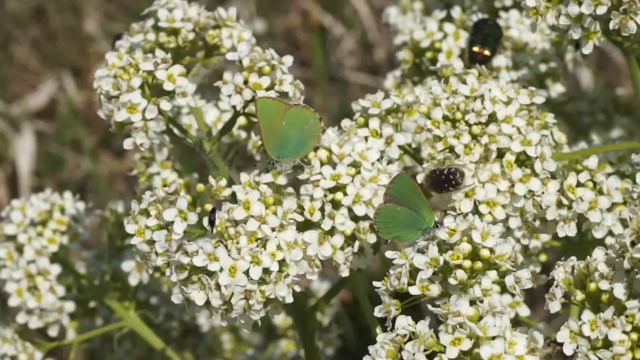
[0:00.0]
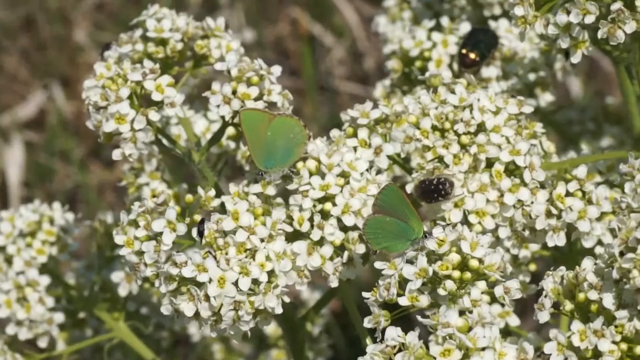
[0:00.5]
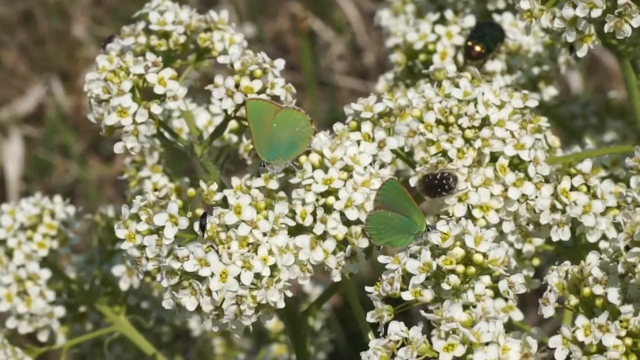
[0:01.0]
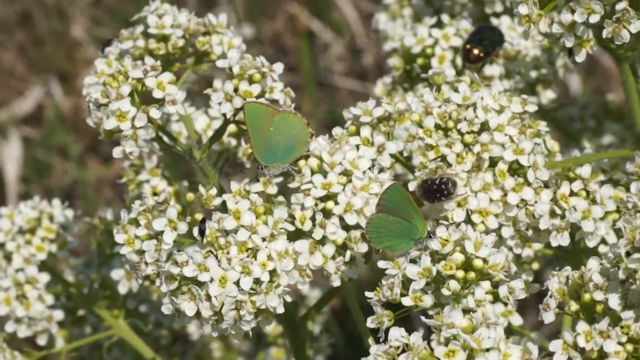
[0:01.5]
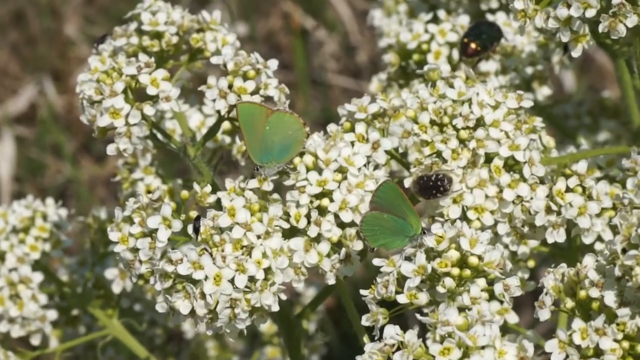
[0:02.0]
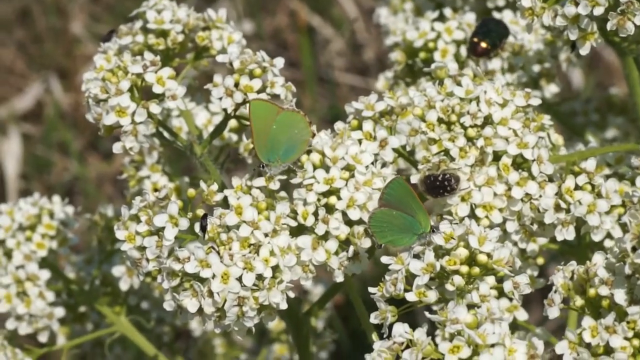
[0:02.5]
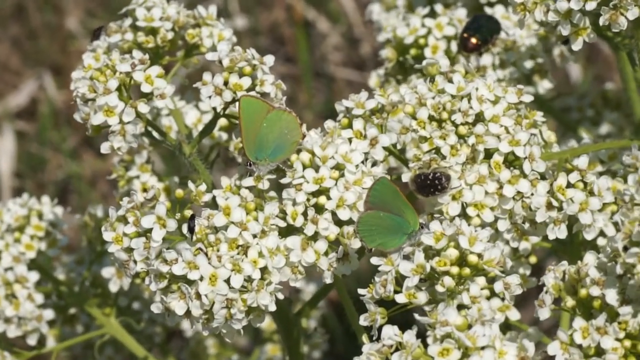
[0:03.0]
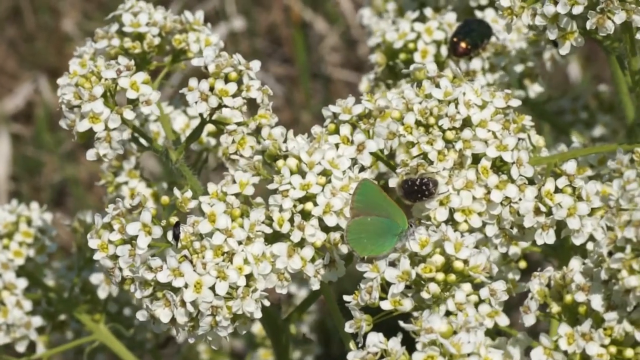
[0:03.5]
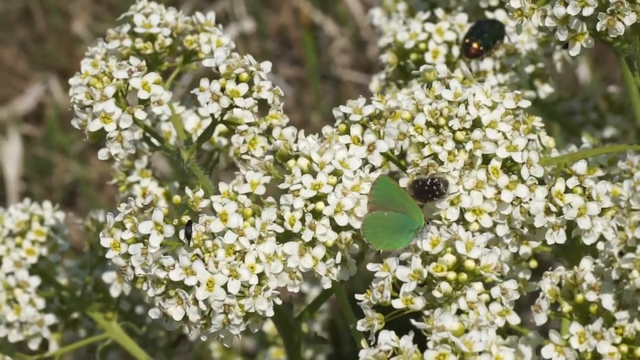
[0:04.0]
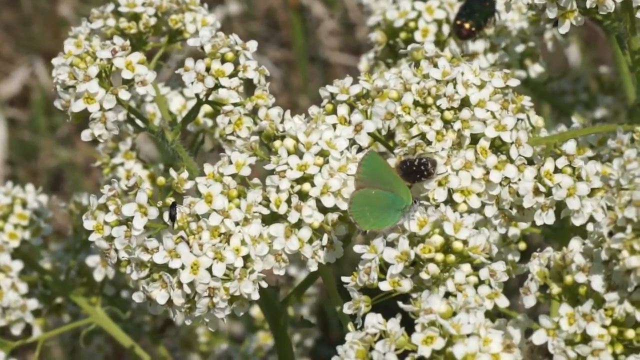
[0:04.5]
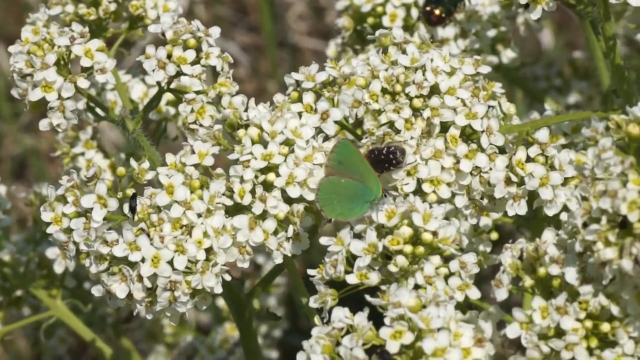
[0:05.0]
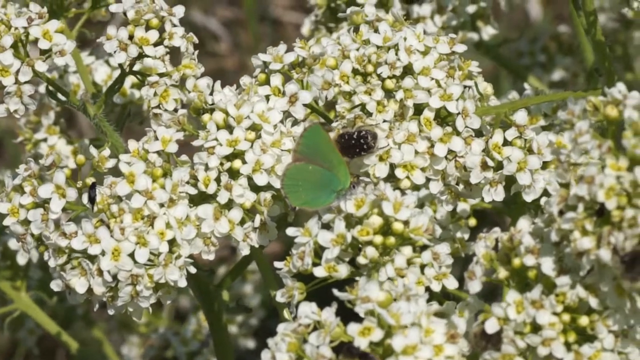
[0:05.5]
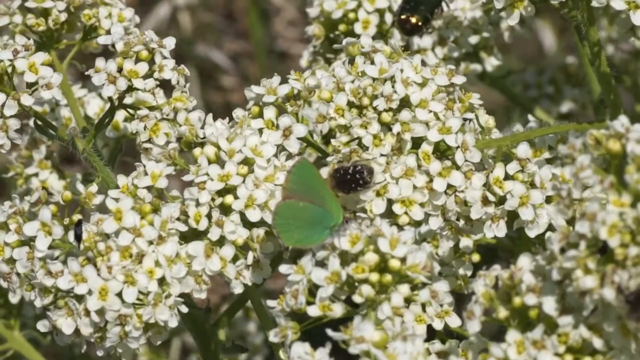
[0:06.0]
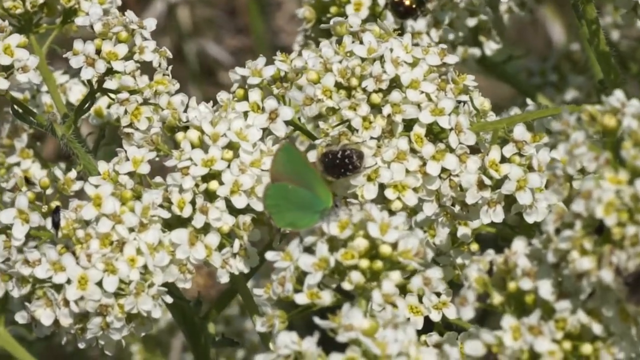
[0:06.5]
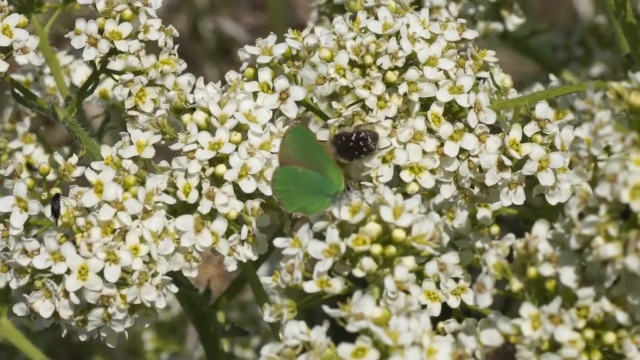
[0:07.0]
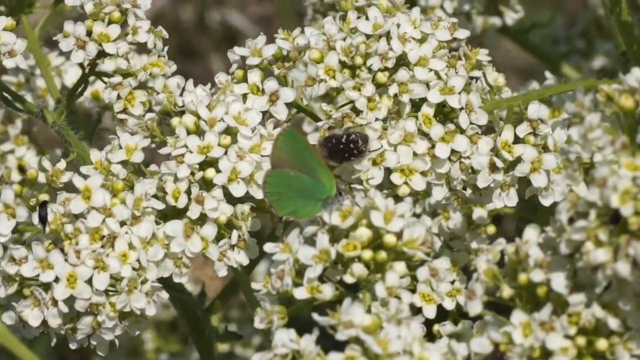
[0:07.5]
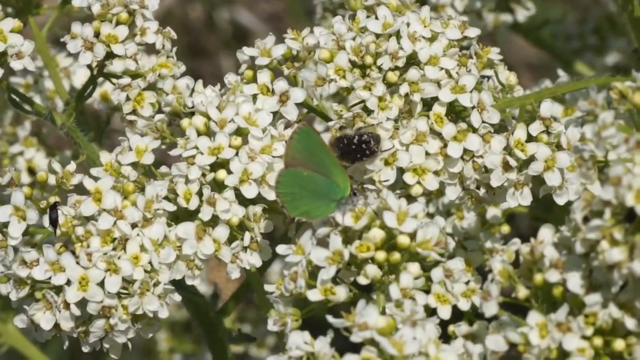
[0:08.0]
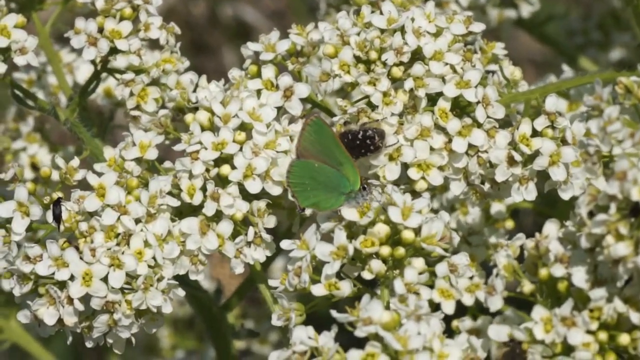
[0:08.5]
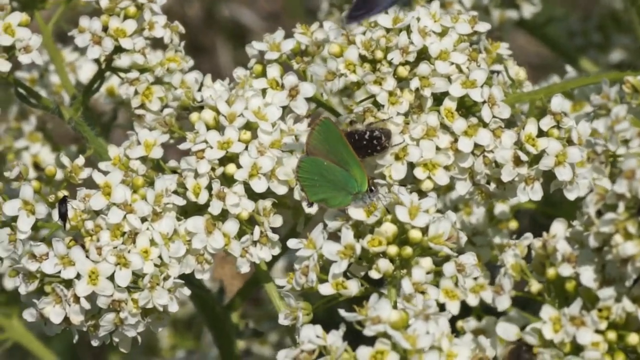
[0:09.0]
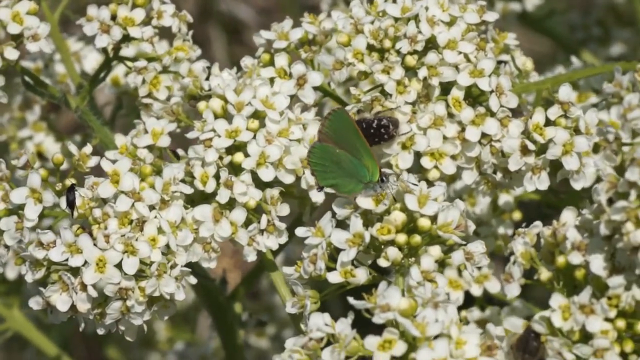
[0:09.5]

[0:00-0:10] The video opens on a very large flower, white with a yellow center. Something is flying around on this flower. Three green objects are visible; they move as if they are alive, their tiny heads moving around on the flowers, and their little feet are grasped onto them. In the very middle of the screen at the beginning there is what looks like a pine cone or some type of dark object, possibly a berry. At the top right of this is something brown with two bright lights in front of it, as if it could be an animal looking over the scene. The flowers themselves are very solid, and there is a distinct flower on the left. The white flowers are in bunches and clumps: a clump on the top left side, another clump that spans out into almost an S shape, and a different clump of flowers on the right side. Something flapping its wings comes from the top right, goes up and around these flowers, and goes off the bottom left.